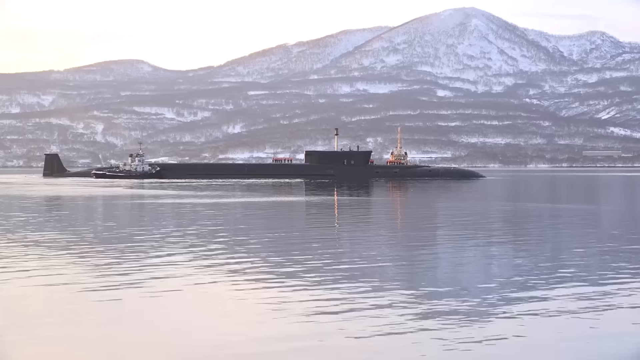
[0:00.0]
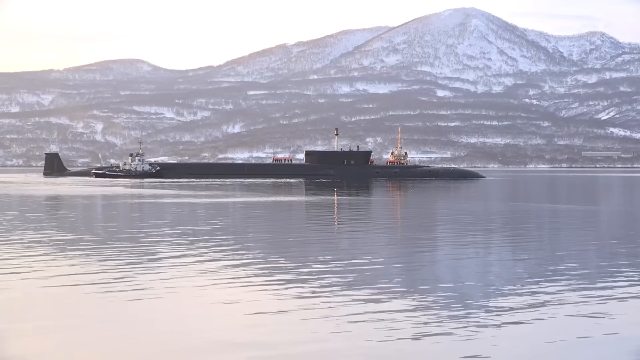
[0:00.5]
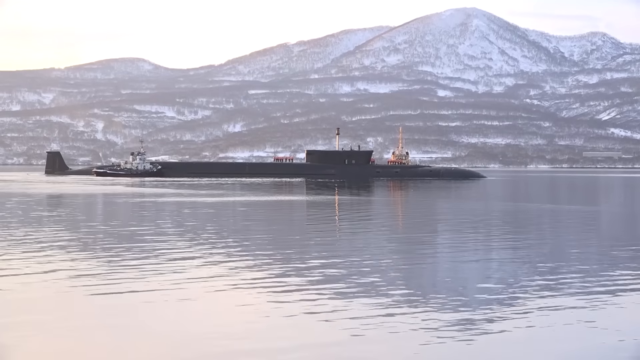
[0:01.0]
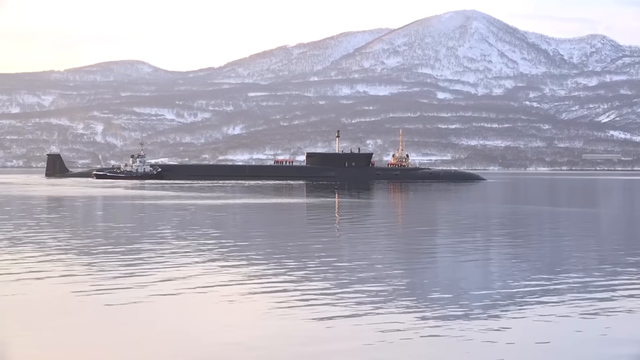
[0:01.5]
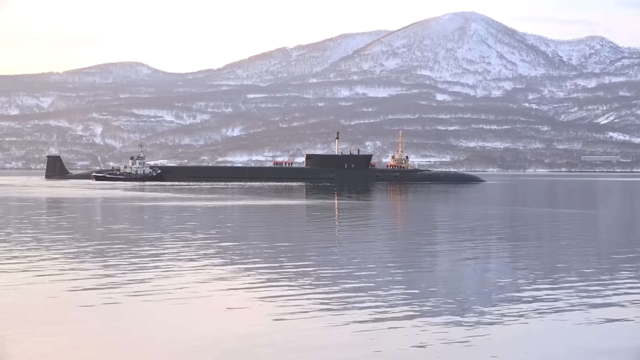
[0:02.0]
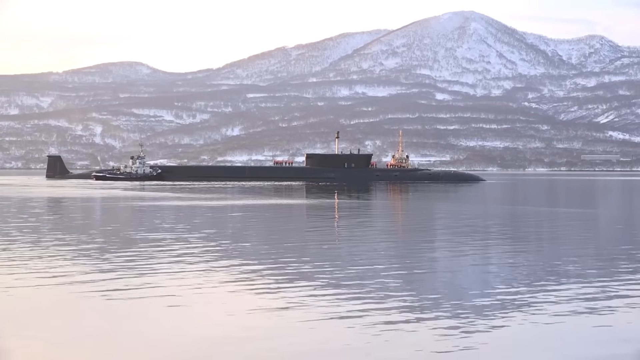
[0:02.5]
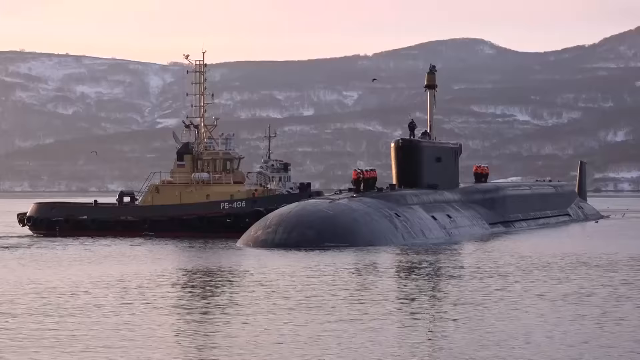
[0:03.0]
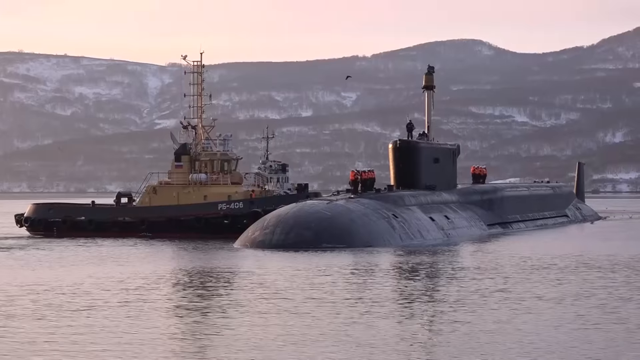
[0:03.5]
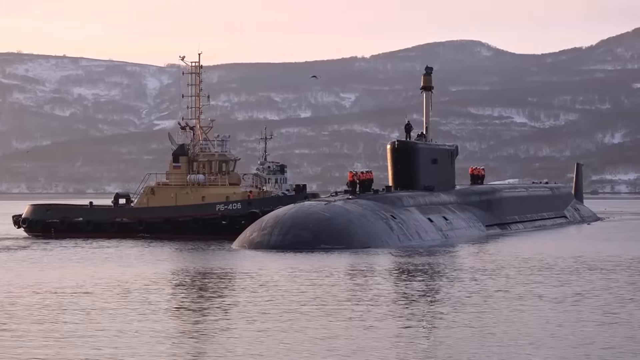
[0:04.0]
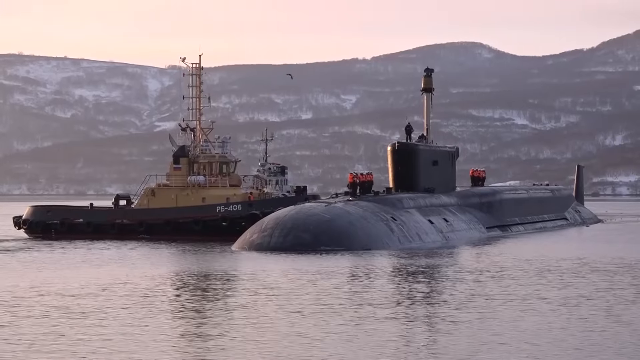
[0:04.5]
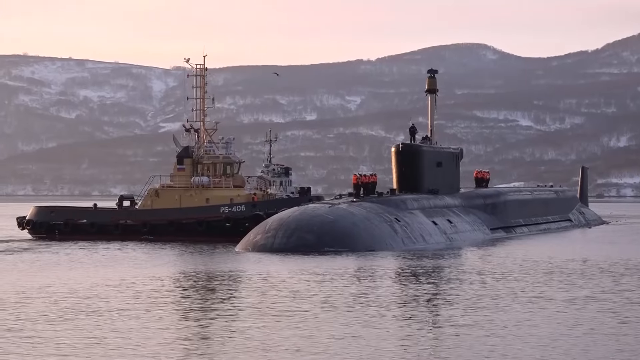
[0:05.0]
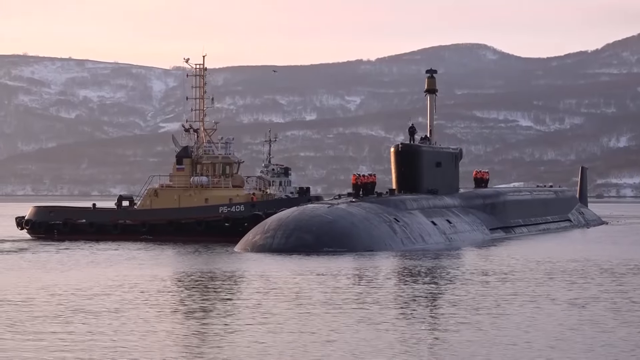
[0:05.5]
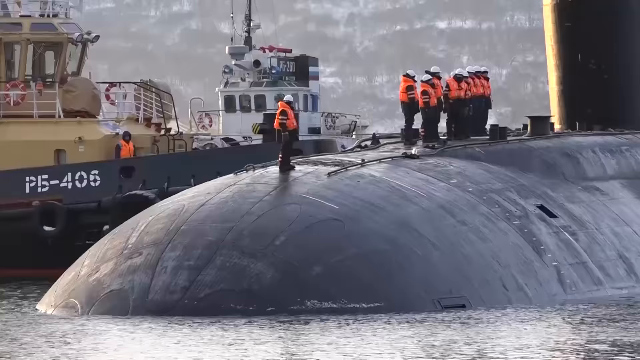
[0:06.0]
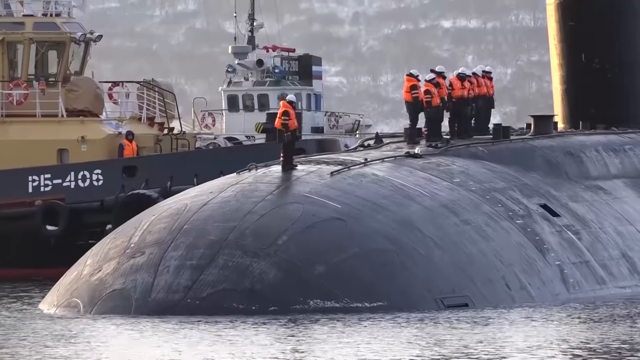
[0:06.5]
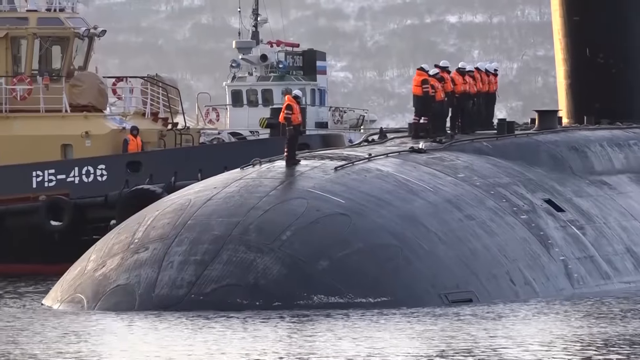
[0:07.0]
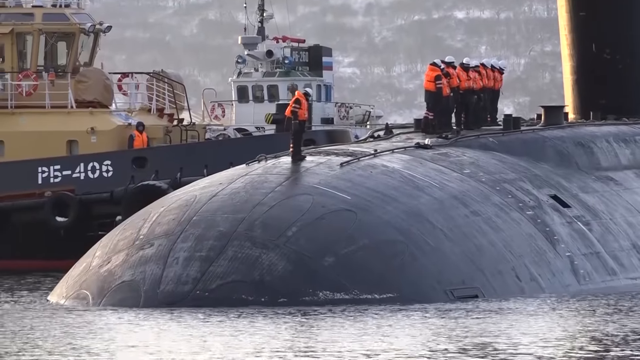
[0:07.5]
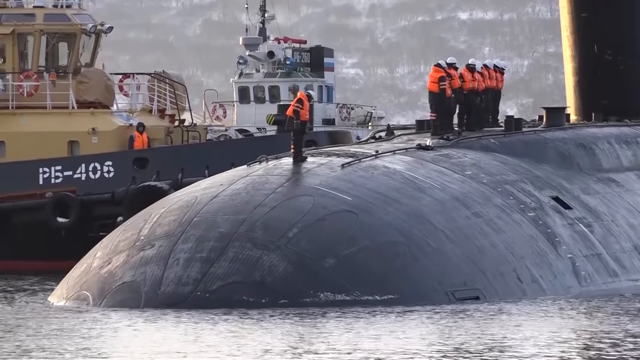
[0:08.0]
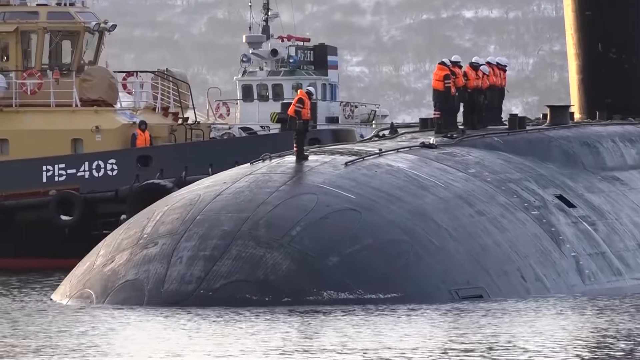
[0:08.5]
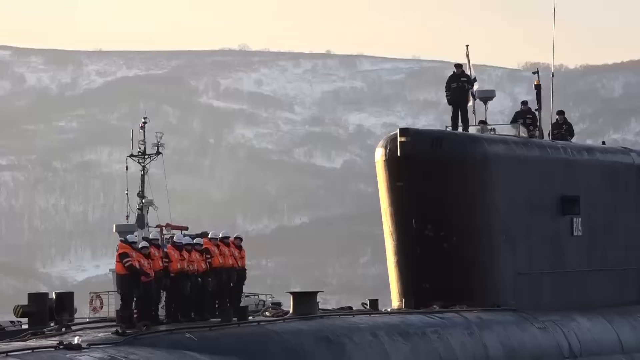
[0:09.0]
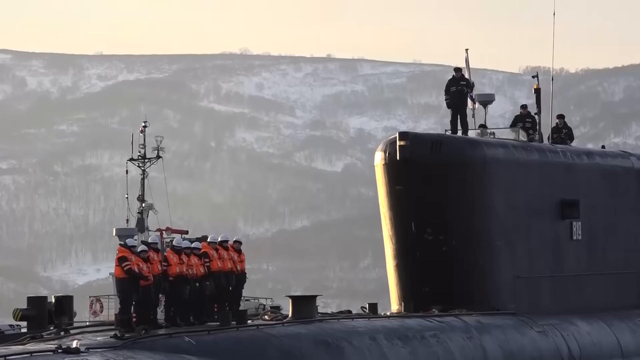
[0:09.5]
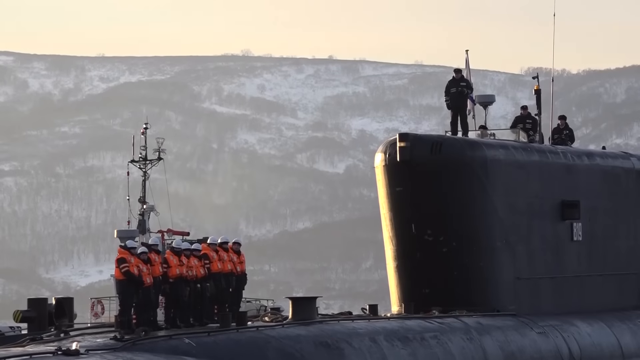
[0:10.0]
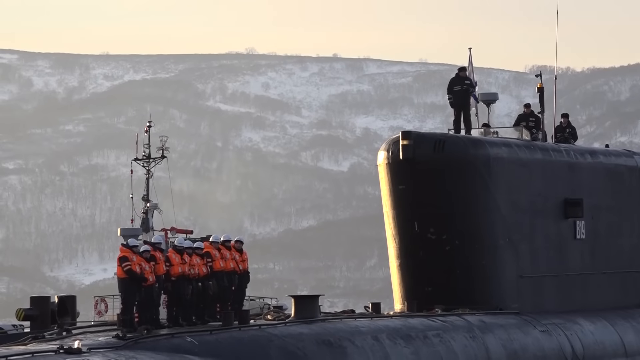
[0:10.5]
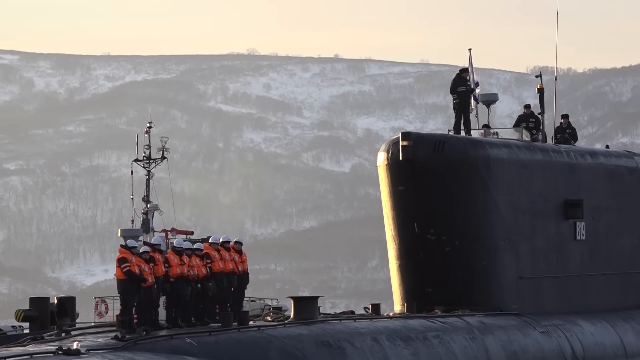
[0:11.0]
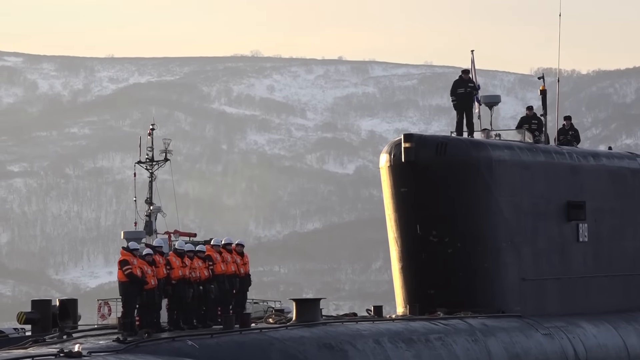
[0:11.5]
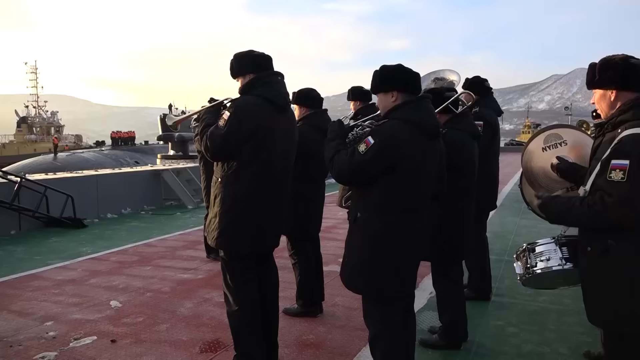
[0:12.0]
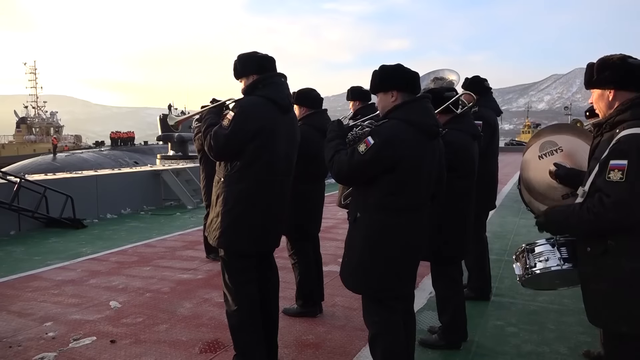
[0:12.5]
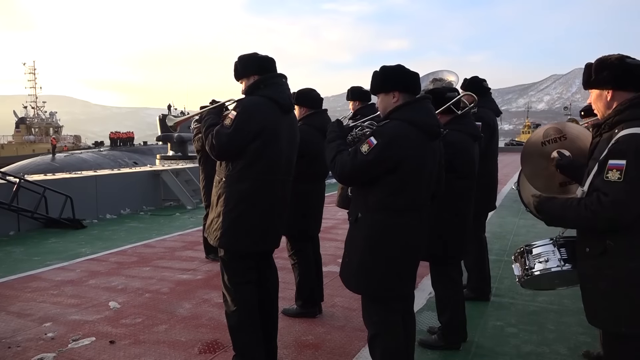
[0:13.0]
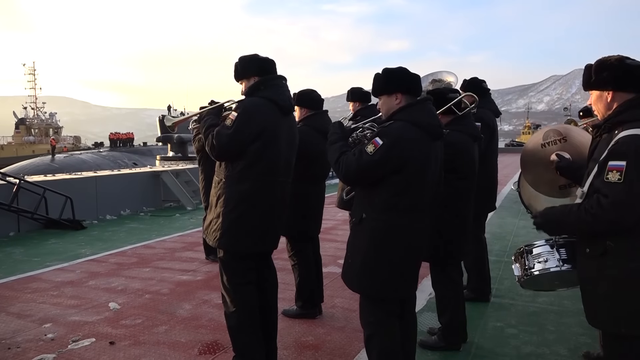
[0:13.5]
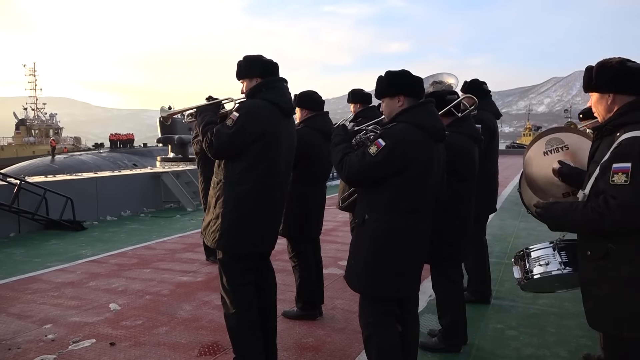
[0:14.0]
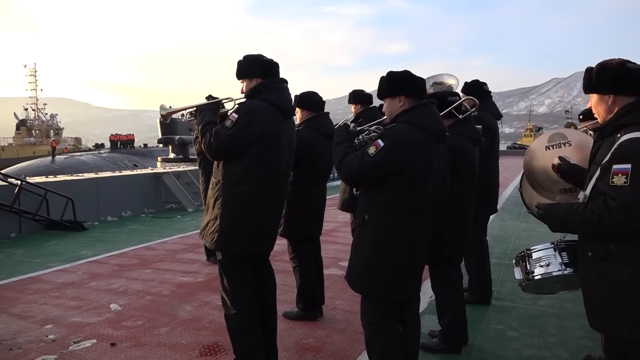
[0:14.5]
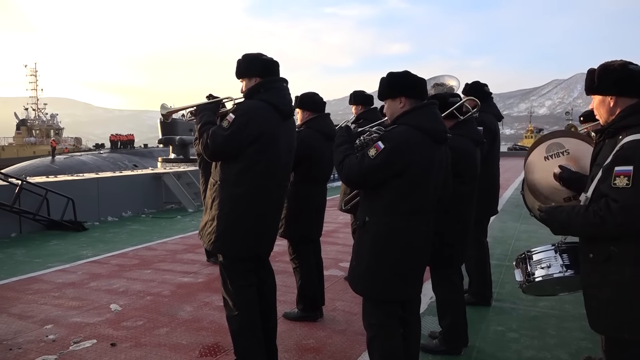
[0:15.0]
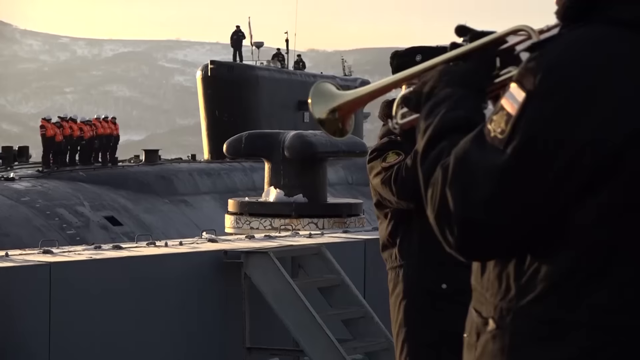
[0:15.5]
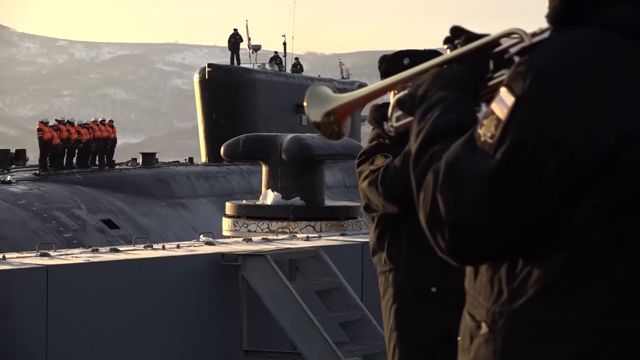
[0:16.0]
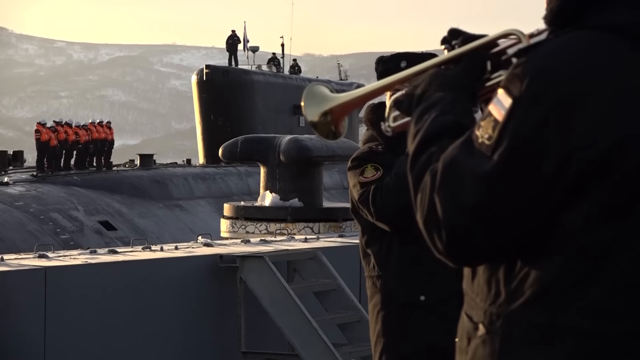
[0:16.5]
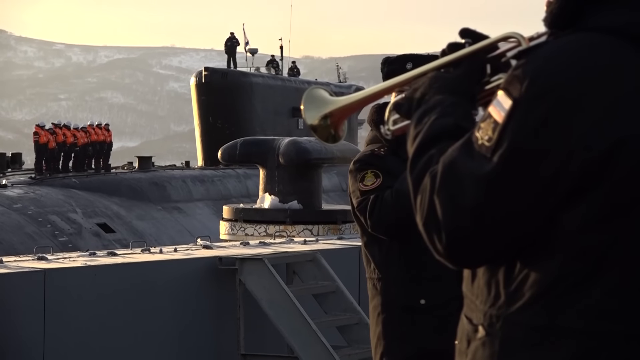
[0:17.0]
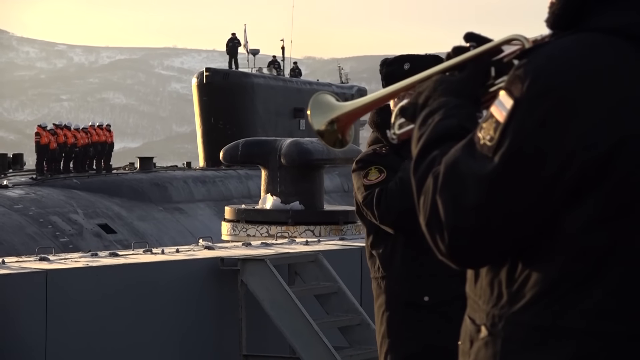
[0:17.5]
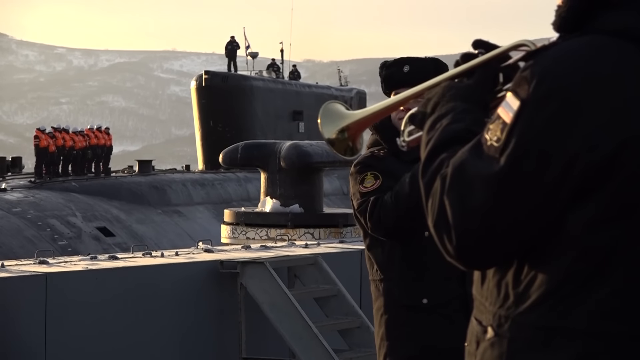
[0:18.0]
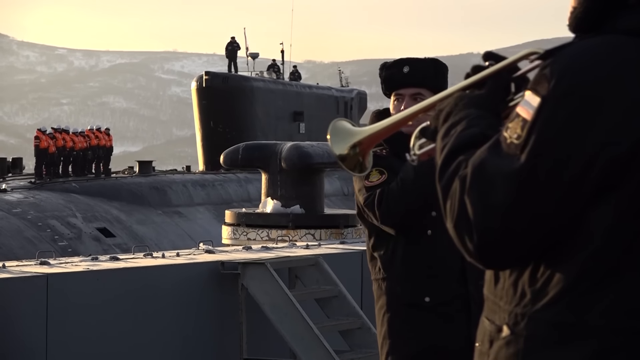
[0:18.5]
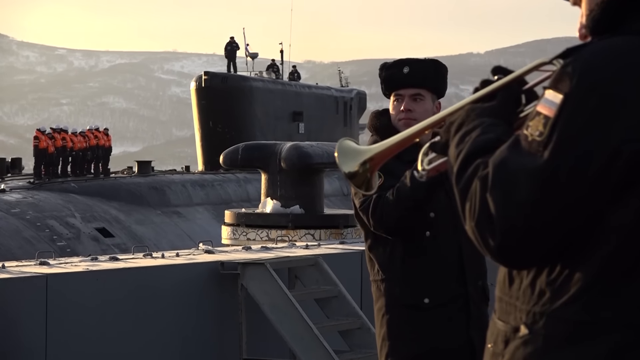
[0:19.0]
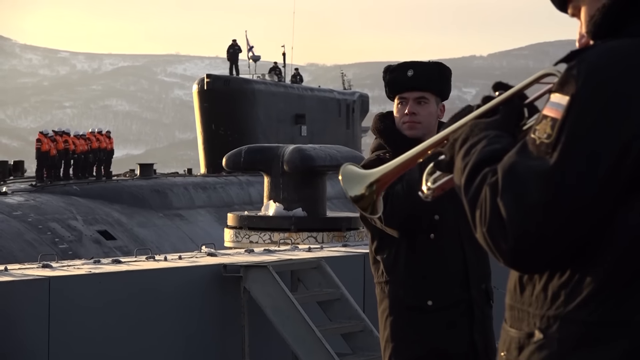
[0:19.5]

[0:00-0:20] What looks like a submarine is at the top of the water, with a snow-covered mountain behind it and water surrounding it. The submarine is floating with the hatch up at the top, having breached the surface. In the next shot, a ship is next to the submarine. A close-up then shows a crew wearing orange life vests standing on top of the submarine. A different shot shows what appear to be soldiers on a ship playing musical instruments: about six of them play trumpets and one behind them plays cymbals. They are wearing all black with hats. The environment appears to be cold, judging by the snow cover on the mountains in the background, and it appears to be a military gathering or celebration. Insignias are visible on their sleeves, apparently white, blue, and red stripes with a golden star underneath.